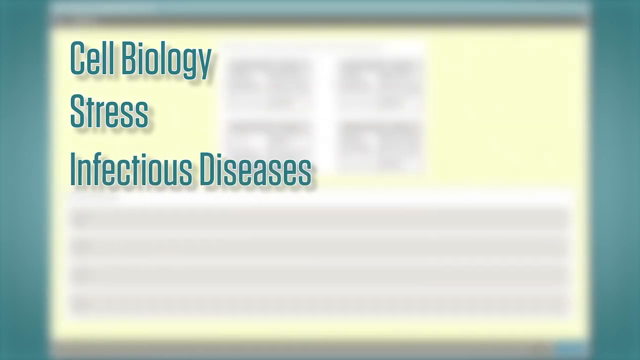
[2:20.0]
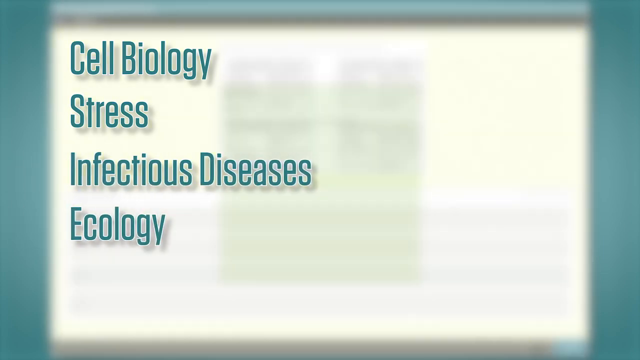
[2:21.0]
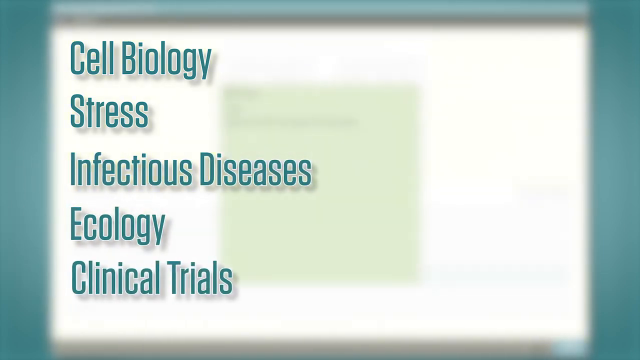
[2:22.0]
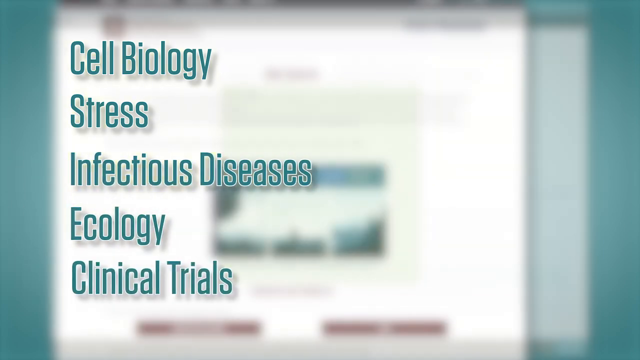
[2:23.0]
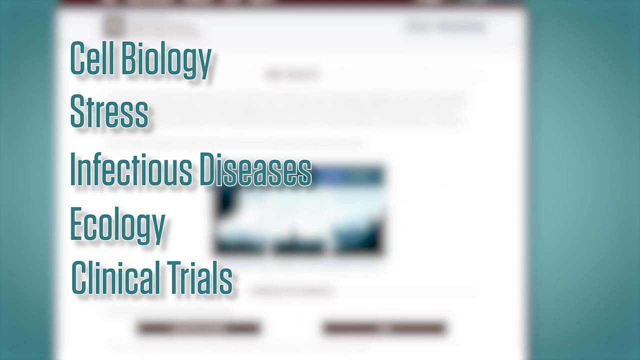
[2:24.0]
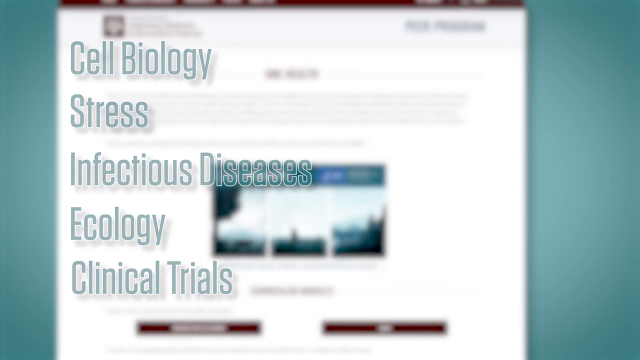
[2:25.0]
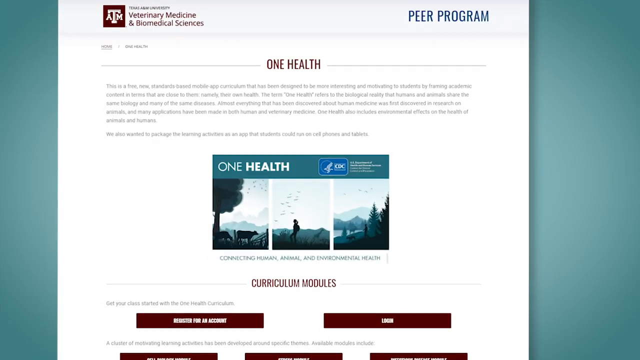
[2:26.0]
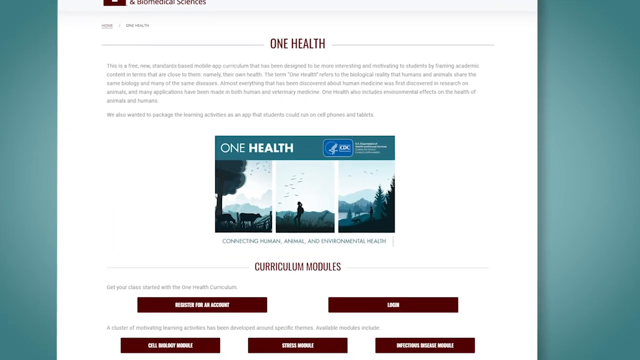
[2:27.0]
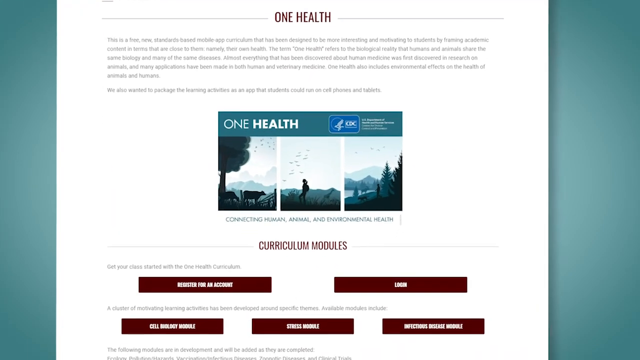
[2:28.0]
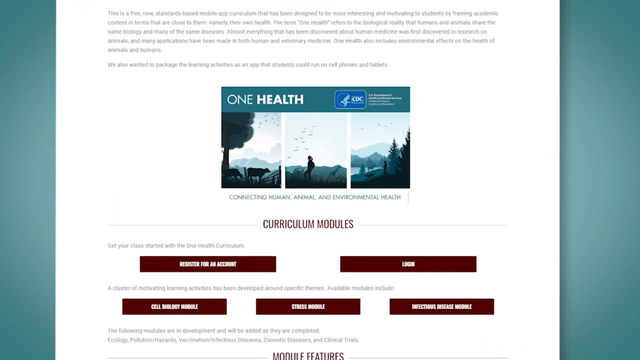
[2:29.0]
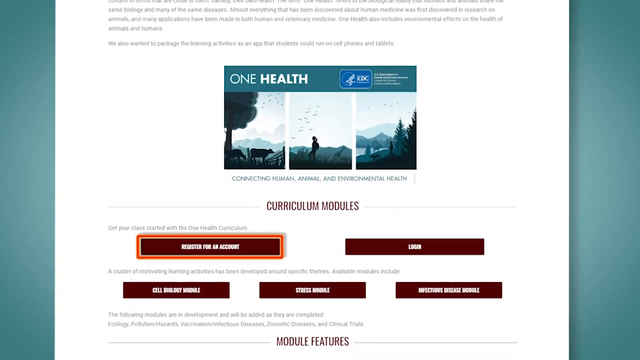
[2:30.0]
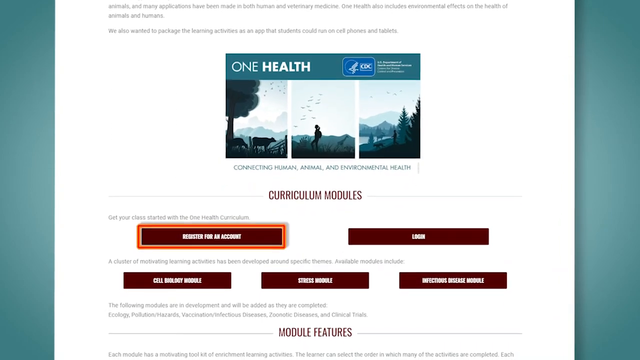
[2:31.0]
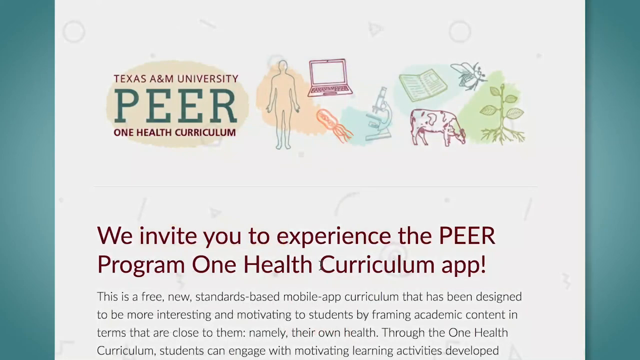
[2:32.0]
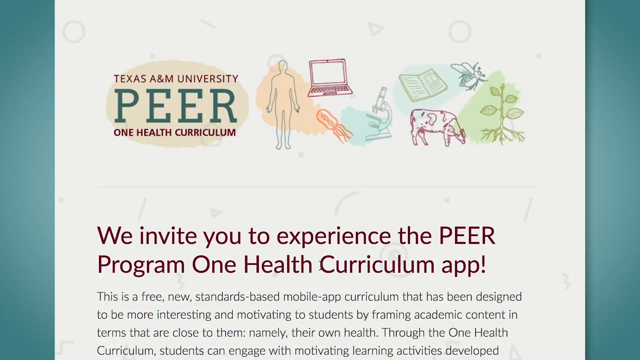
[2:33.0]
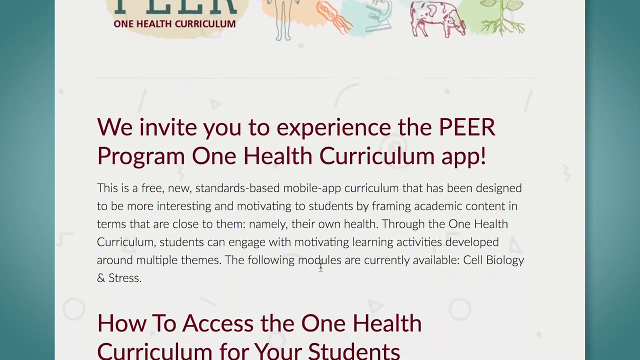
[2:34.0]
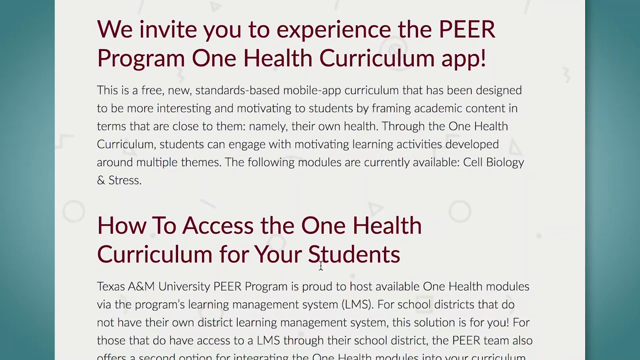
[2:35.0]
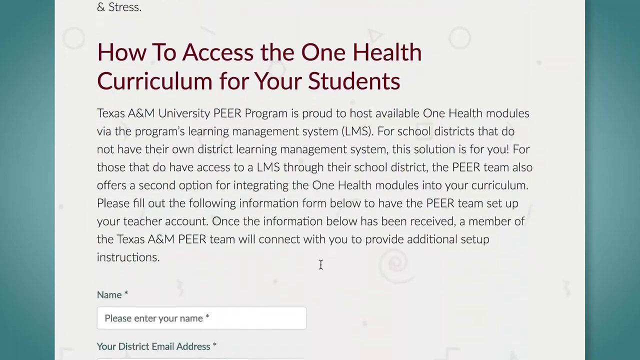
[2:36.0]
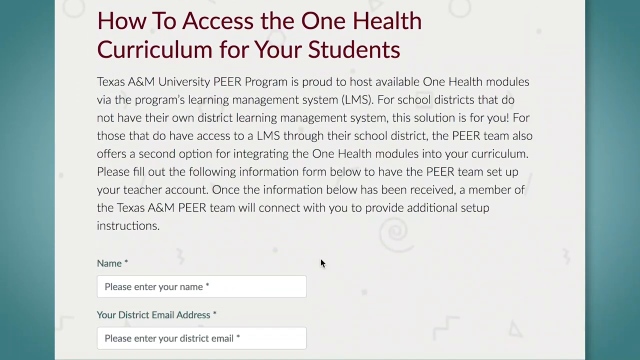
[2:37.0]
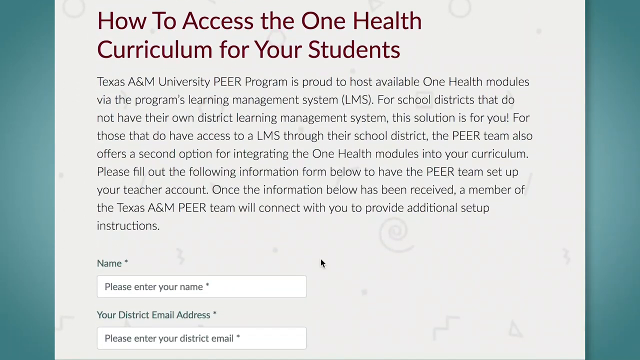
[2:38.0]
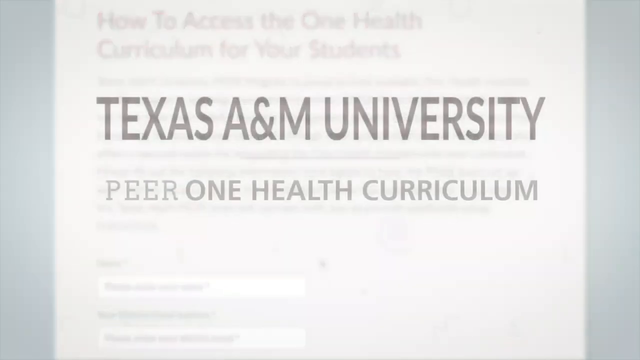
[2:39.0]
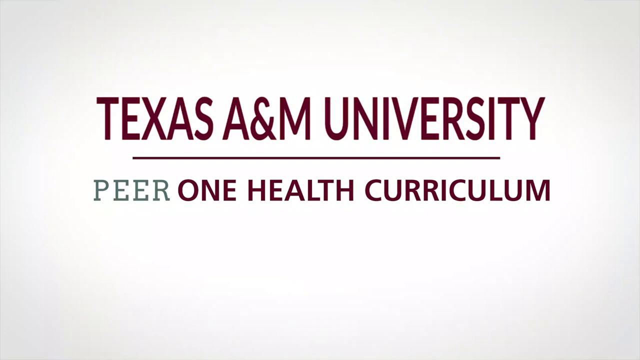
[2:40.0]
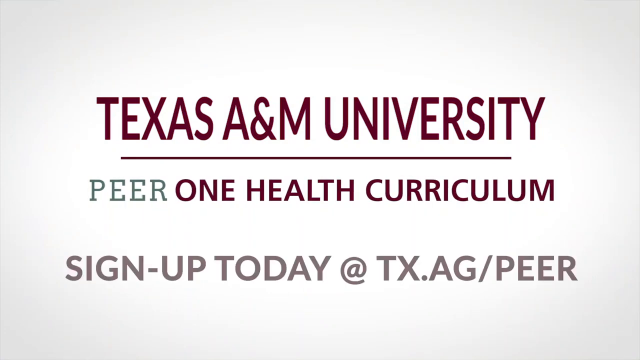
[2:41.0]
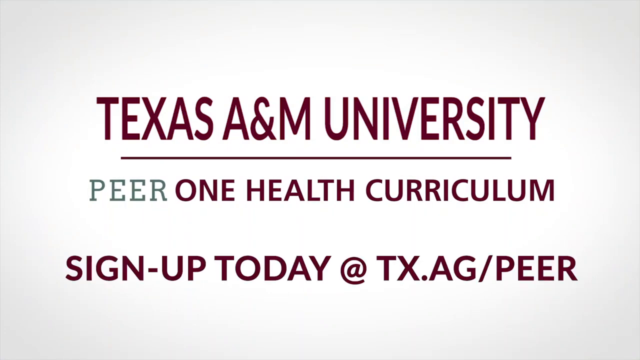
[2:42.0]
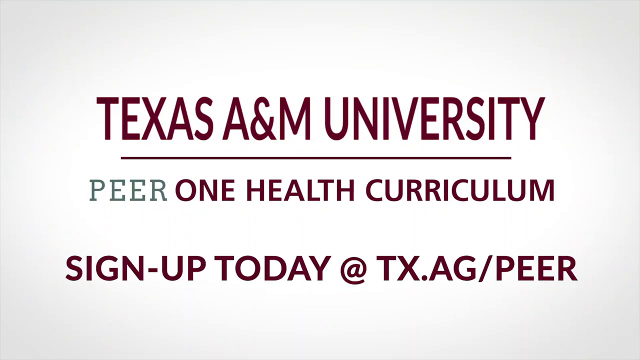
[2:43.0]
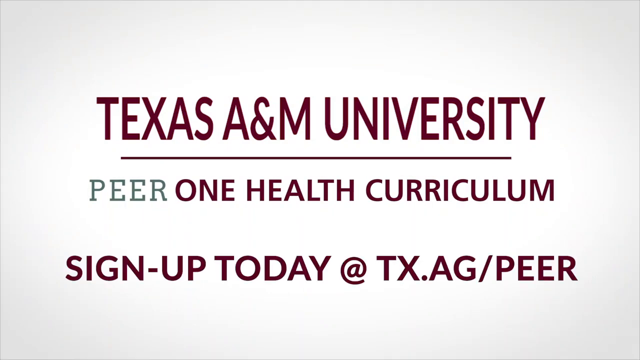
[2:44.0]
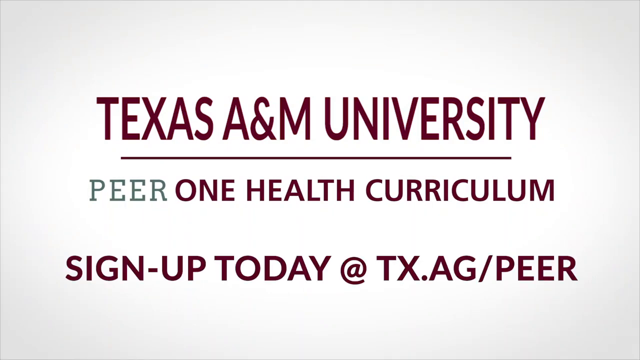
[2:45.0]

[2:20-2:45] Green words appear along the left side of the screen: "cell biology", "stress and infectious diseases", then "ecology" and "clinical trials". Behind them the background is blurred pages that are out of focus. The words disappear and the page comes into focus; it is titled "One Health" and shows curriculum modules, with "Register for an account" highlighted. Next is a page reading "Texas A&M Peer One Health Curriculum. We invite you to experience the Peer One Health Curriculum app." It is scrolled through, showing where a name would be entered. Then a white page shows large, centered dark maroon text reading "Texas A&M University", a thin line beneath it, "PEER" in green under the line, and "One Health Curriculum" in dark maroon. More maroon text then appears at the bottom, reading "sign up today at tx.ag/PEER".